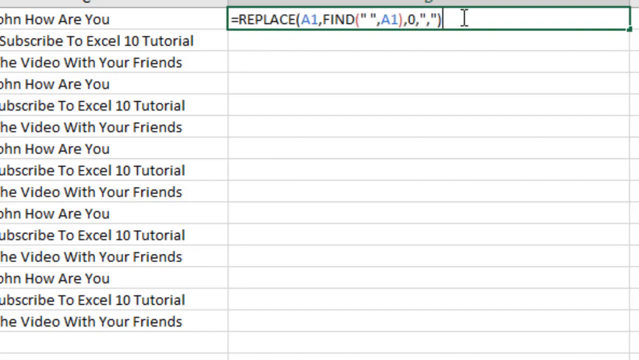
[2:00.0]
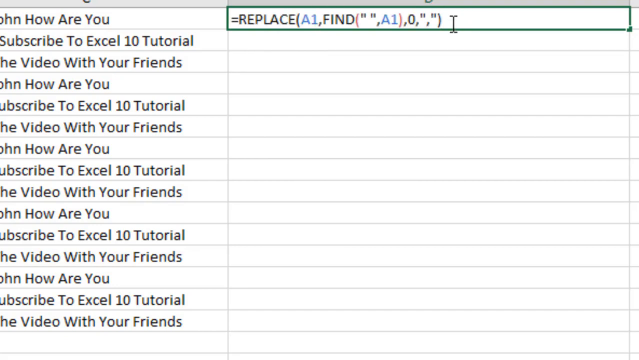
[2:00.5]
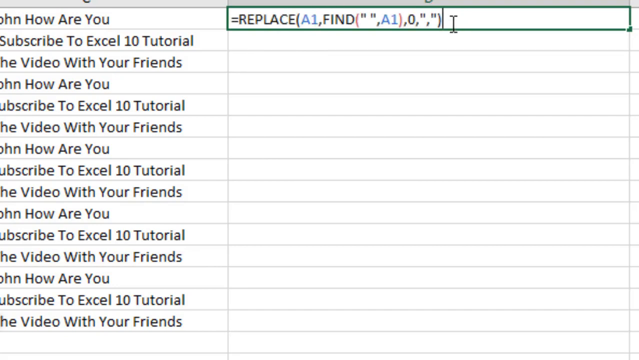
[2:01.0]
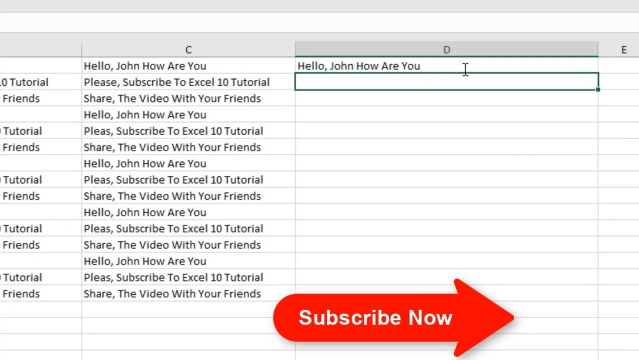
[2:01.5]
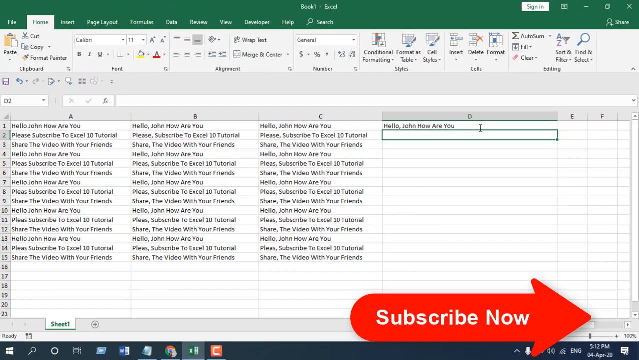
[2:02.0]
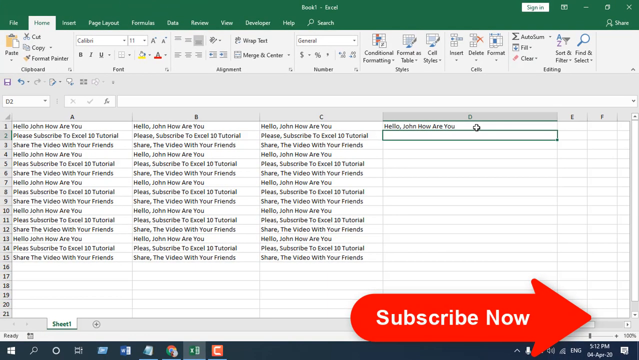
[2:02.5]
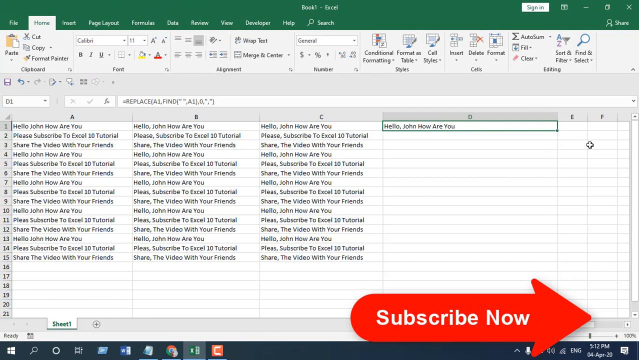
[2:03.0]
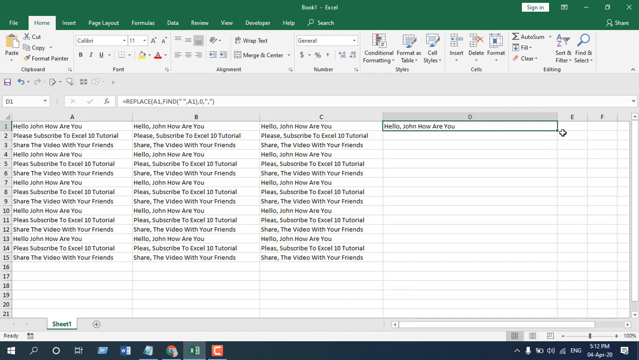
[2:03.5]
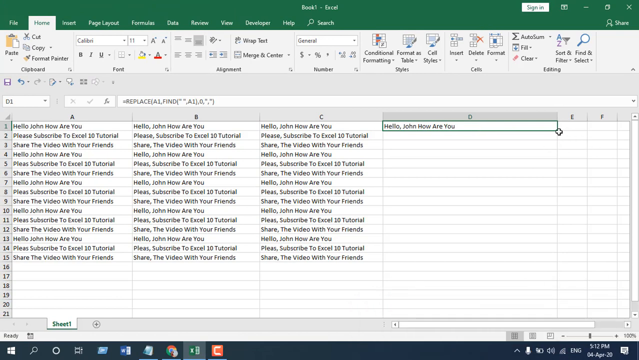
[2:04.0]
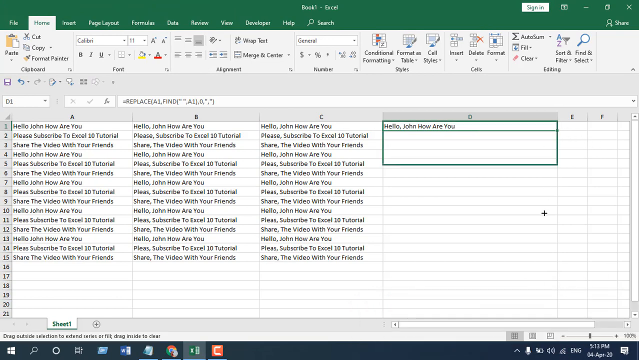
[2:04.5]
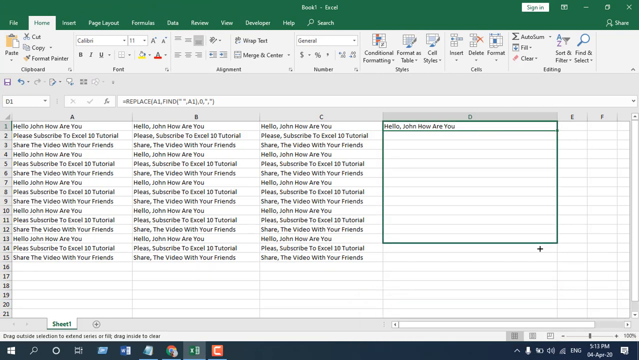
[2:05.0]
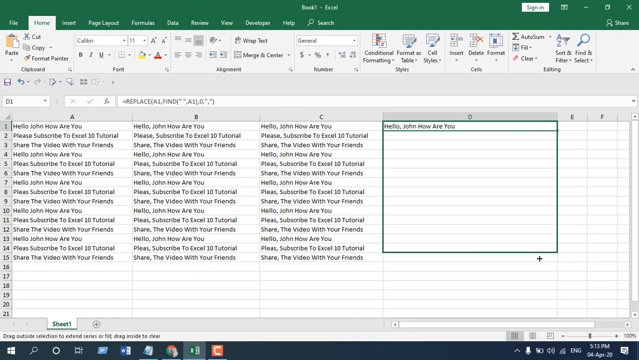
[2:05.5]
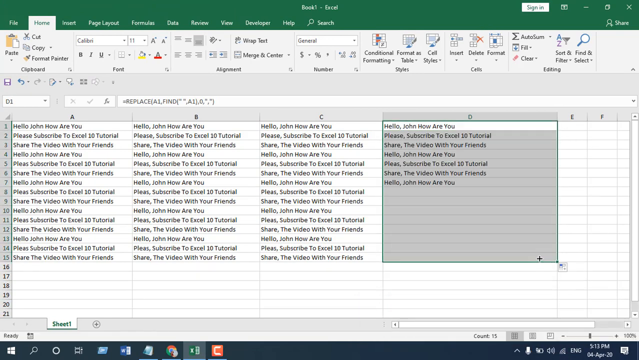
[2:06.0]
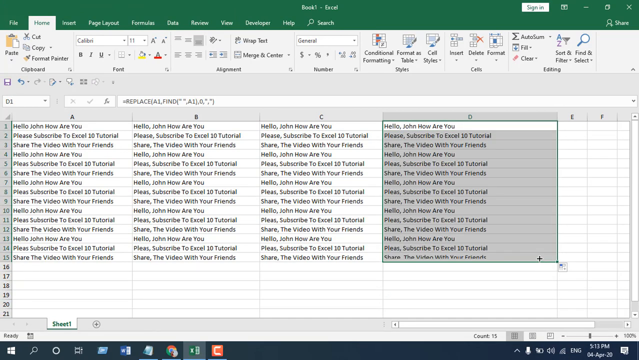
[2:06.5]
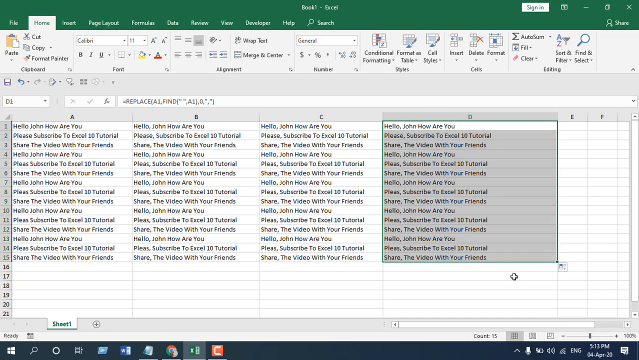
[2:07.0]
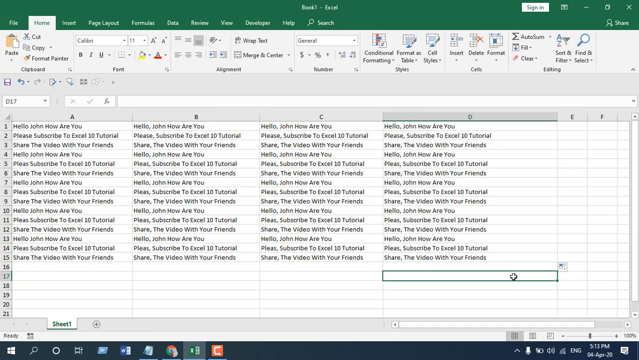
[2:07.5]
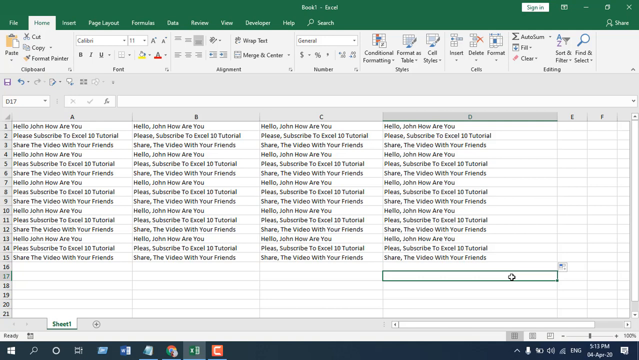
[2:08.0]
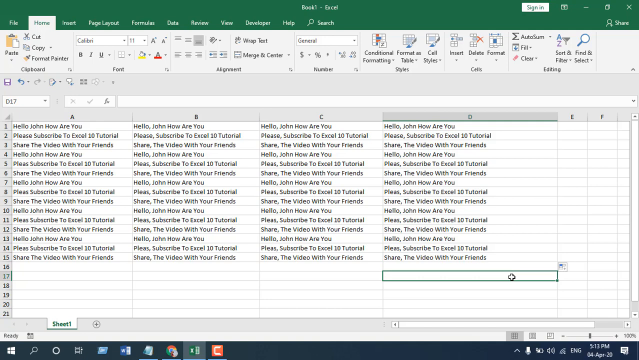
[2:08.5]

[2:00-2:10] The person goes to column D and does the same thing as in the previous columns. The view is very zoomed out, especially at the very end, compared to the rest of the video, where it is usually zoomed in closely.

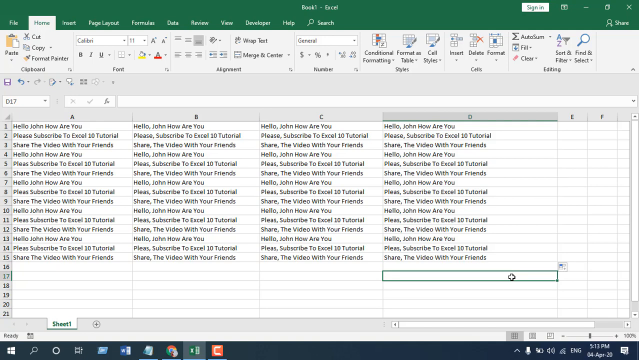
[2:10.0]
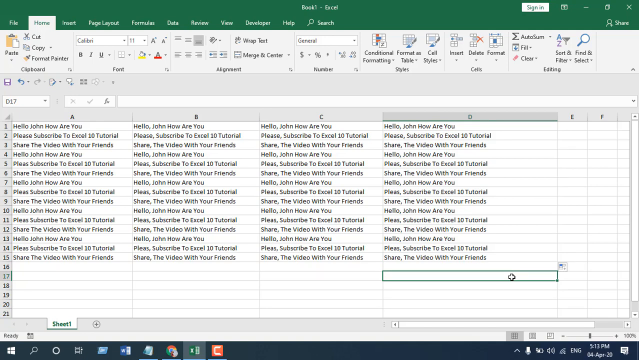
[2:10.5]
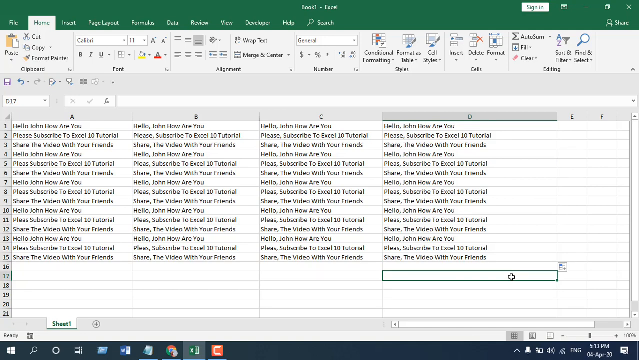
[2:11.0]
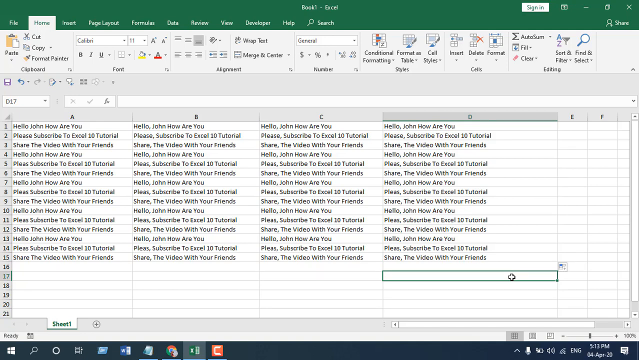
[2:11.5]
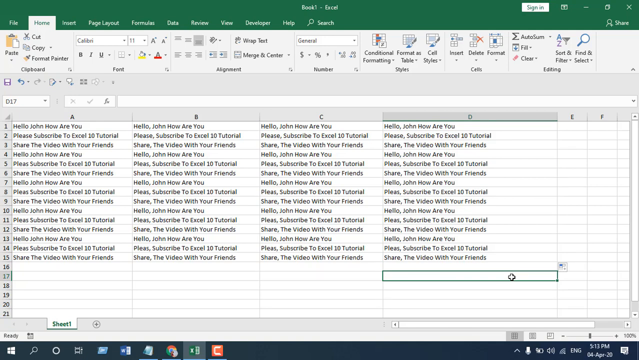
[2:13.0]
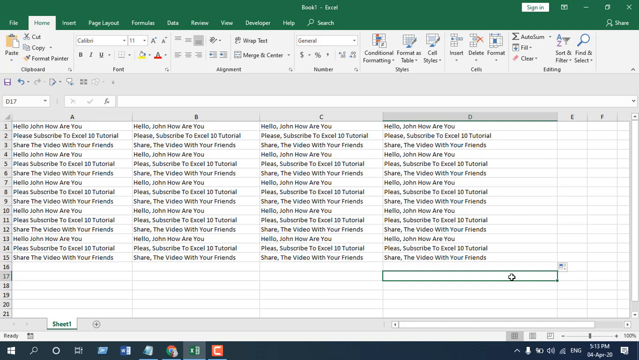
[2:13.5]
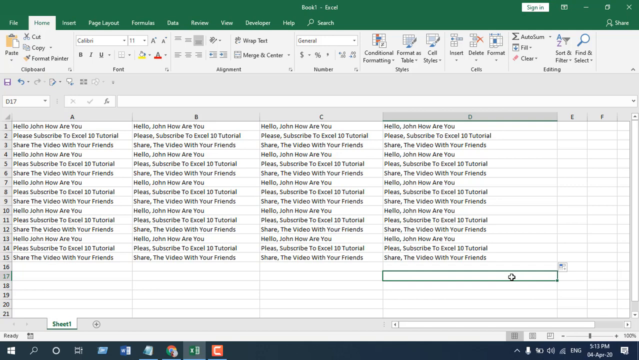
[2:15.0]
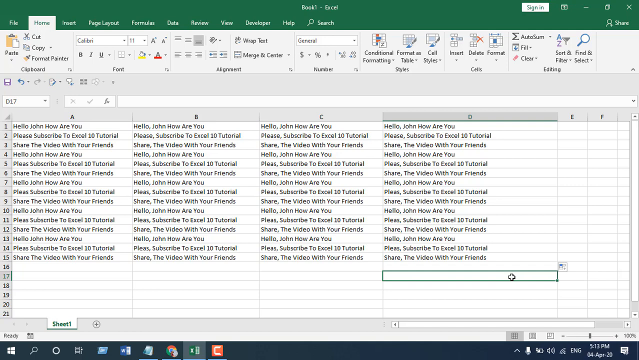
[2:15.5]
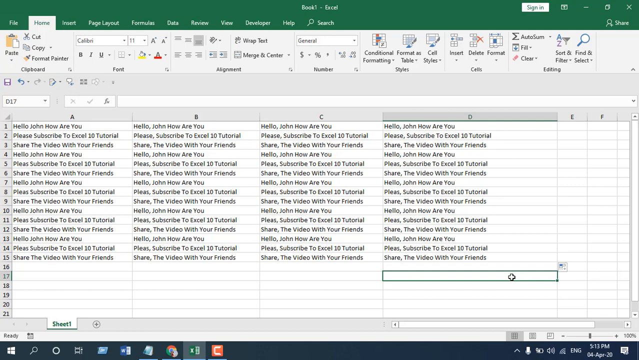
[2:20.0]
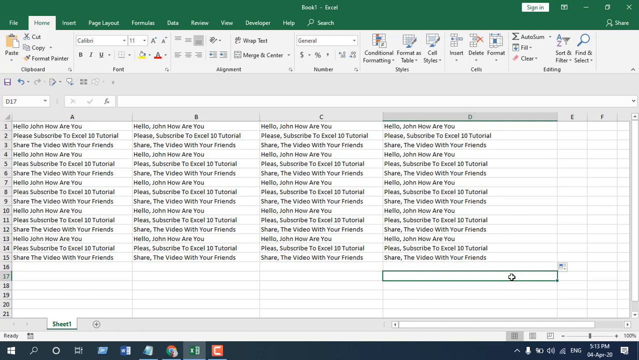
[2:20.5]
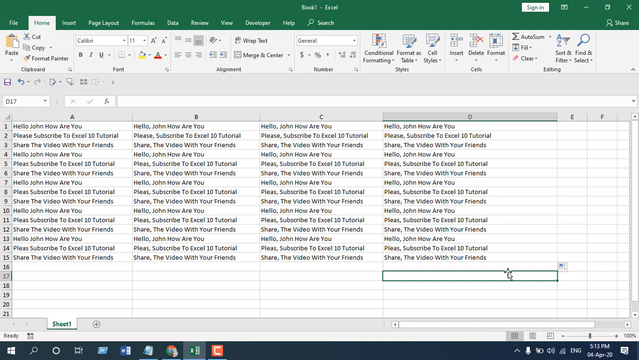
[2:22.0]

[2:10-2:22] The person clicks on D17 and is highlighting it, without otherwise doing much. All the cells in columns A, B, C and D are visible: column A is different, while B, C and D are basically copies of each other. The taskbar at the bottom right shows the date April 4th 2020 and the time 5:12 PM.